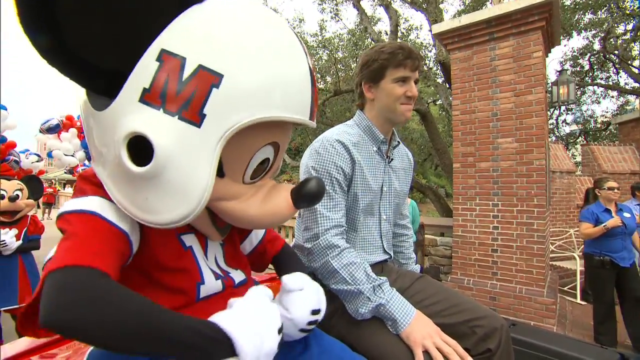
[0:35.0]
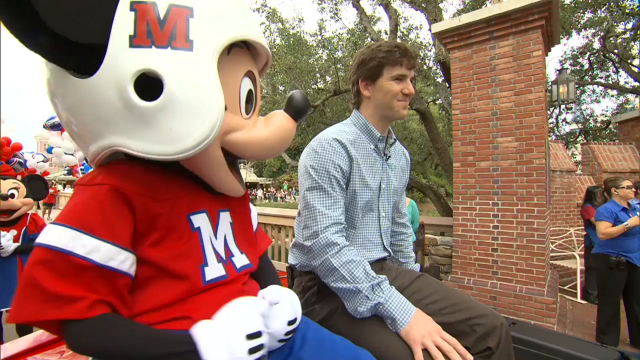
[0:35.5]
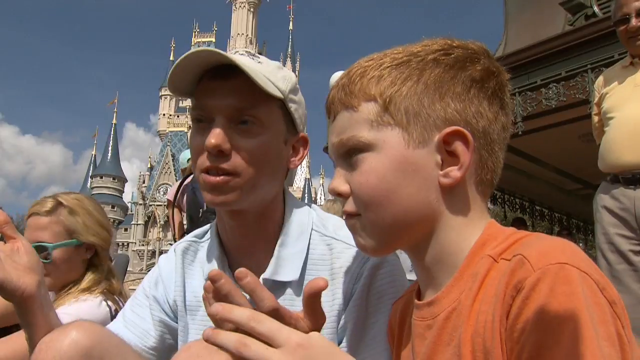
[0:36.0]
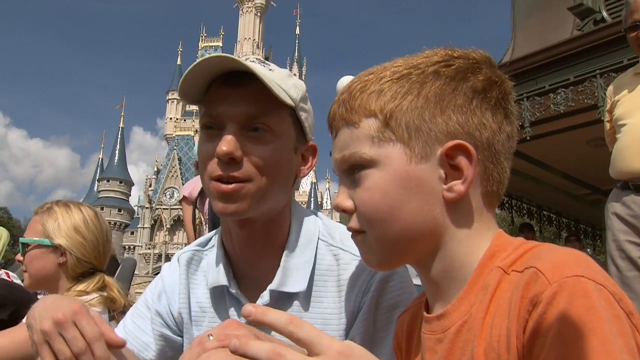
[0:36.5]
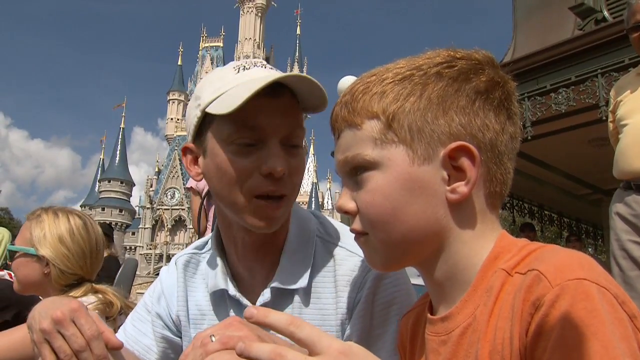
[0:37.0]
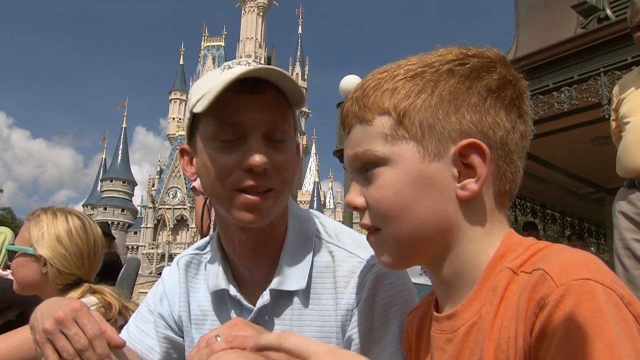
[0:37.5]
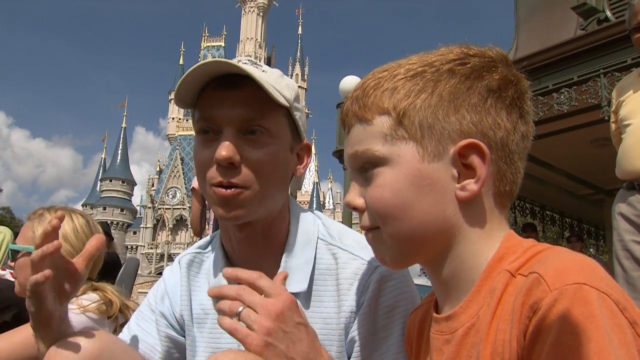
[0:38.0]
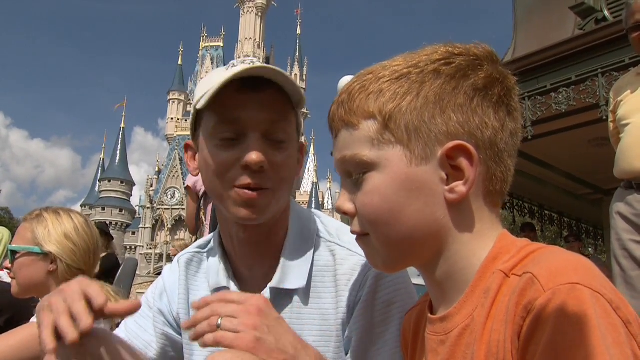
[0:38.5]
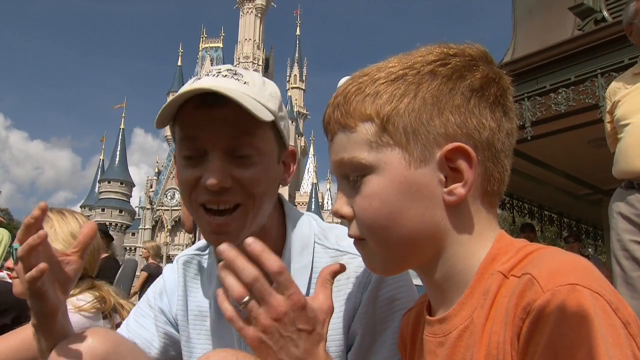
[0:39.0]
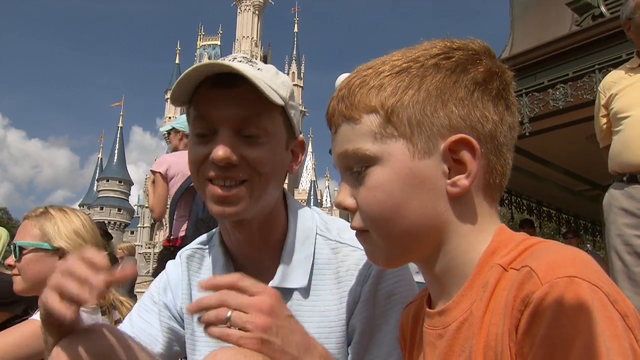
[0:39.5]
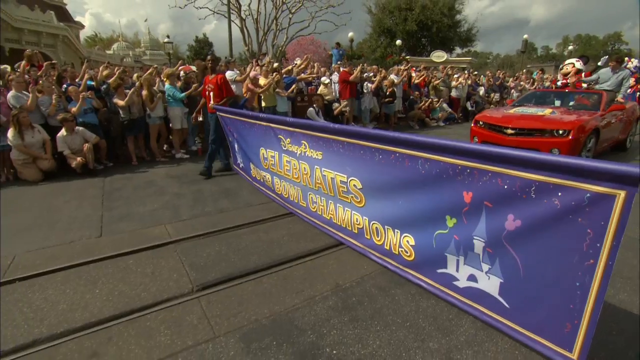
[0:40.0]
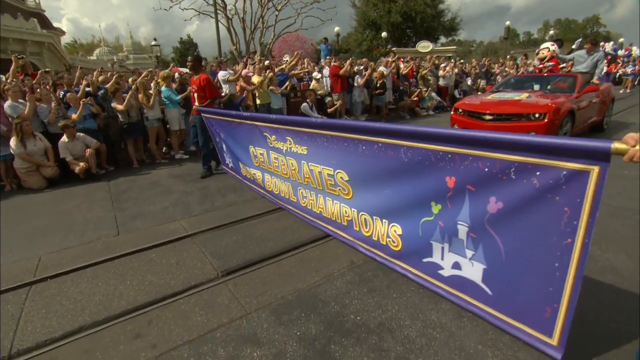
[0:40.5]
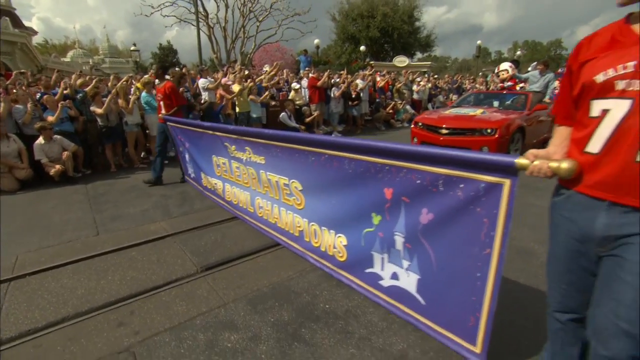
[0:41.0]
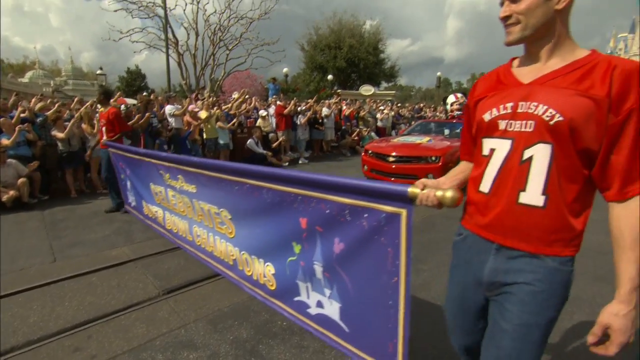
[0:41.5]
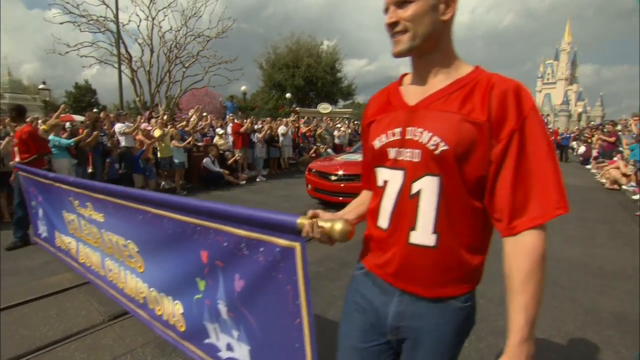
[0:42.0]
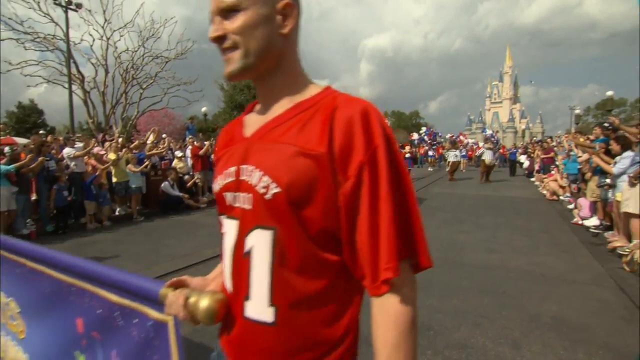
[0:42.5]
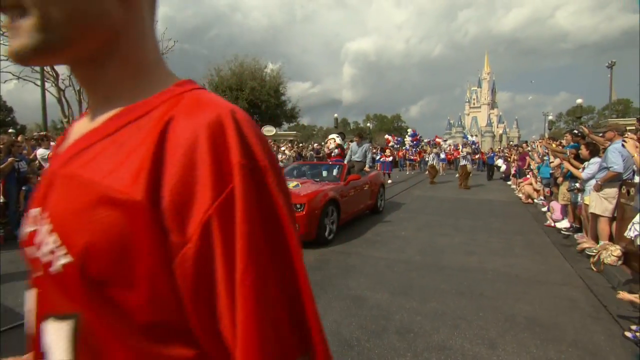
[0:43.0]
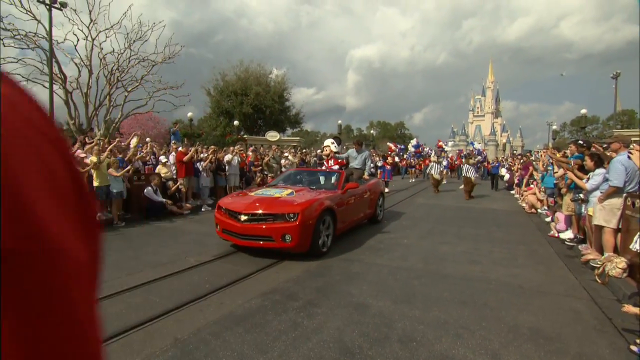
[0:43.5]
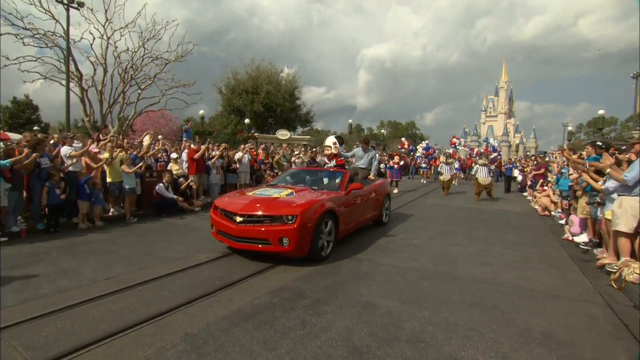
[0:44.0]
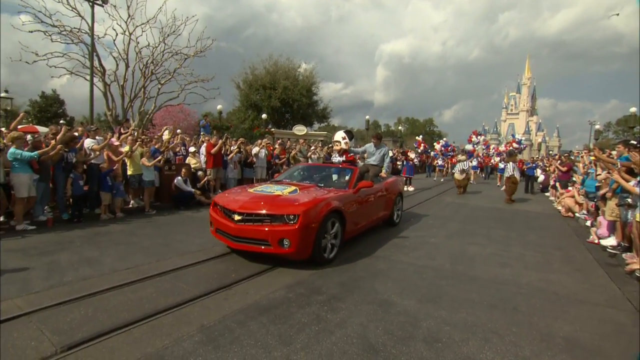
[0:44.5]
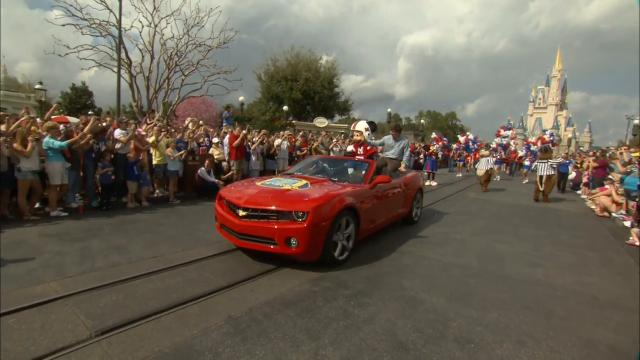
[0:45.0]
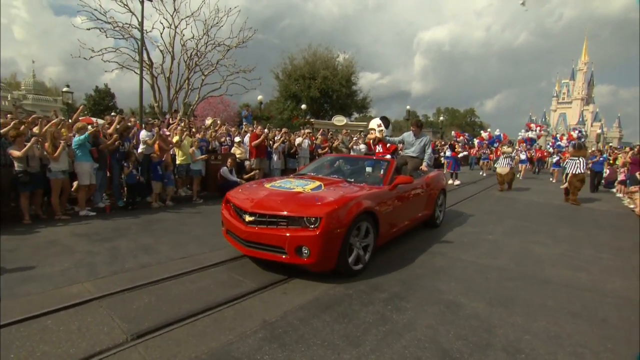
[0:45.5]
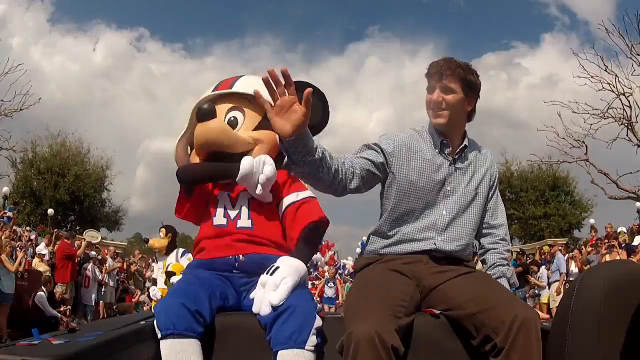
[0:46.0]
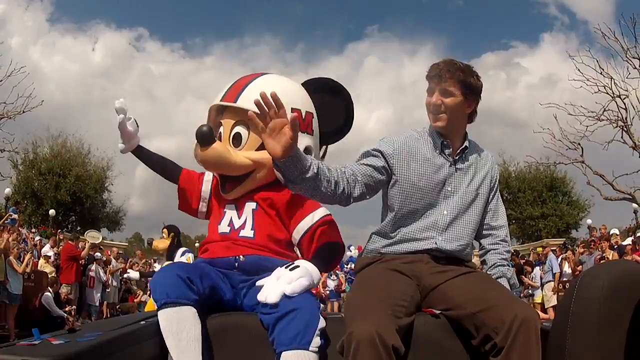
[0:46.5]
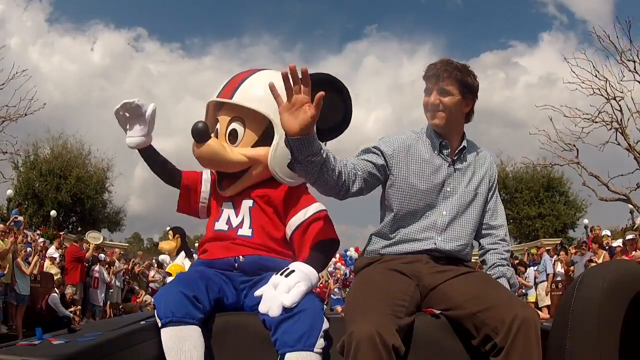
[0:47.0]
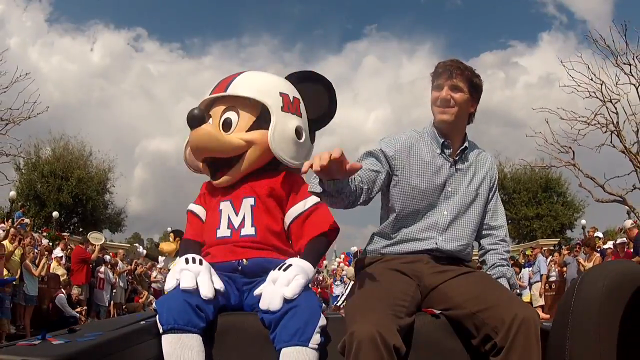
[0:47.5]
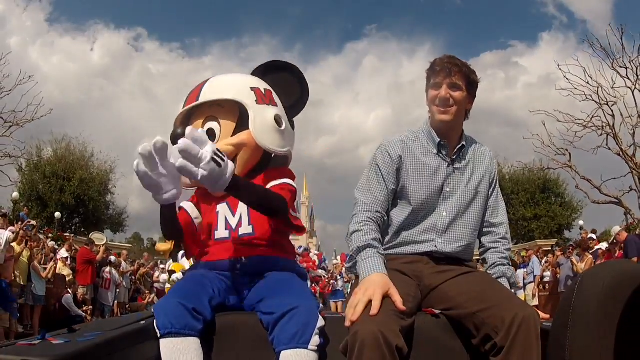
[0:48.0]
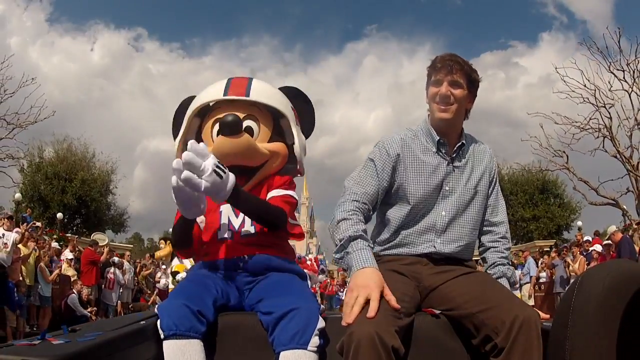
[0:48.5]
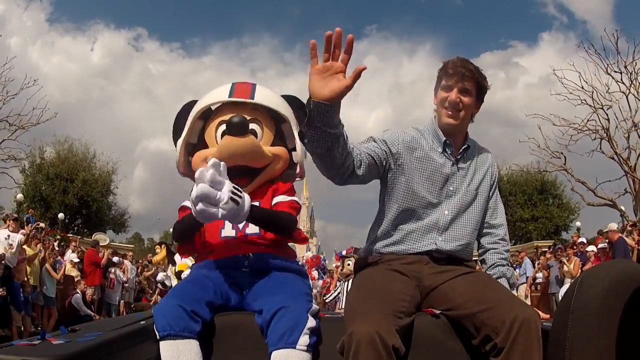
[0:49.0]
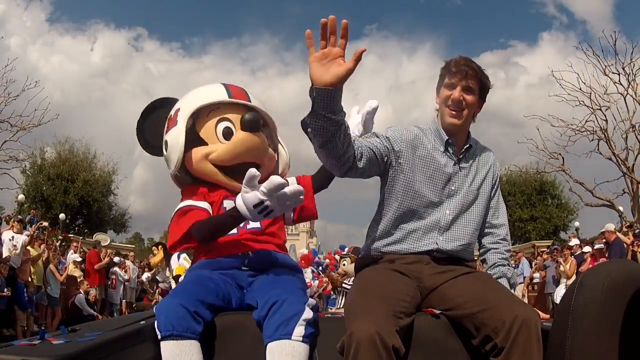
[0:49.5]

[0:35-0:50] Two people, maybe a father and son, are seemingly being interviewed. The father wears a hat, talks to whoever is asking a question, looks toward the kid, and gestures with his hands. After a few moments, the Disney Parks banner from the beginning appears again, held by two people on either side. Behind them, the red car containing Mickey Mouse and Eli Manning slowly rides down the parade route, with onlookers on the right side. Eli and Mickey Mouse wave toward them, and Eli smiles. The Magic Kingdom building is in the background, and there are people on the left side as well, so onlookers are on either side of the parade route watching as Eli and Mickey slowly drive down. Other members of the parade behind them also hold red, white, and blue balloons. It is relatively sunny but also overcast, with clouds collecting in the sky.